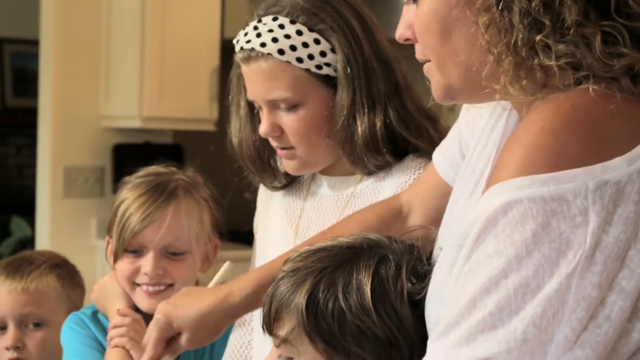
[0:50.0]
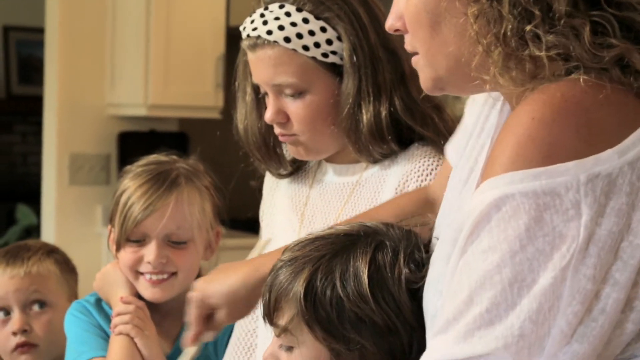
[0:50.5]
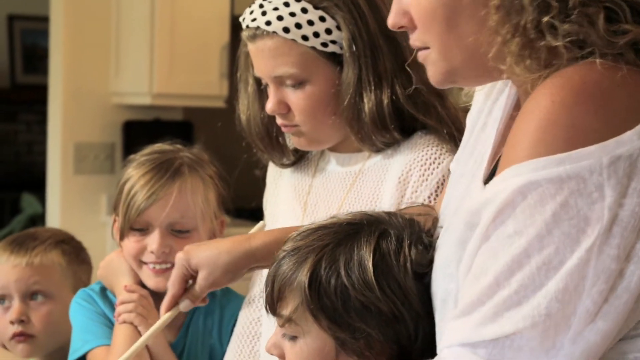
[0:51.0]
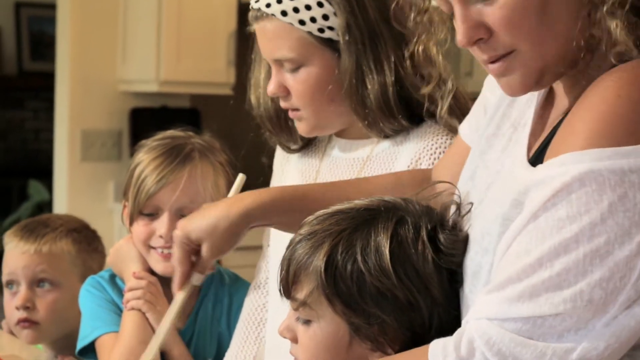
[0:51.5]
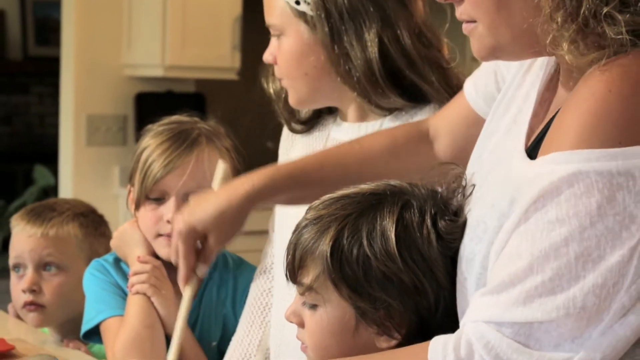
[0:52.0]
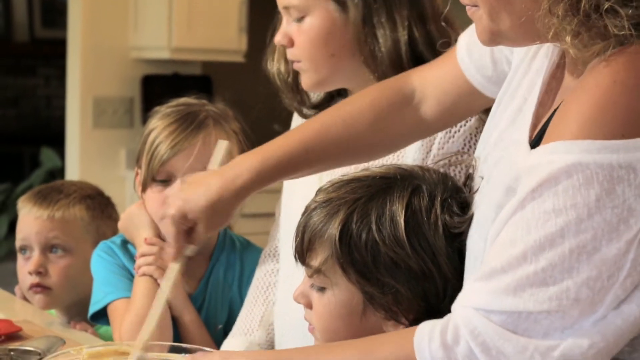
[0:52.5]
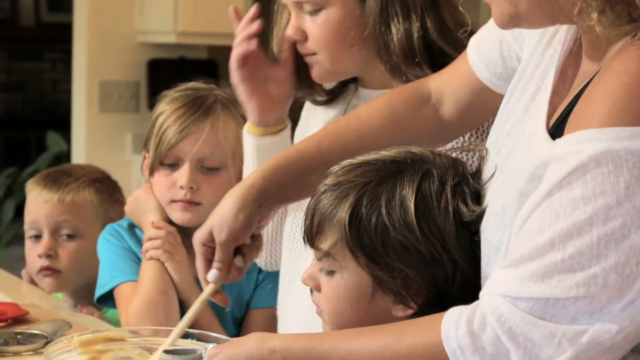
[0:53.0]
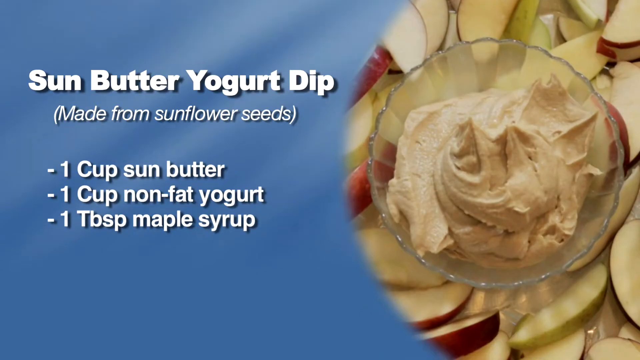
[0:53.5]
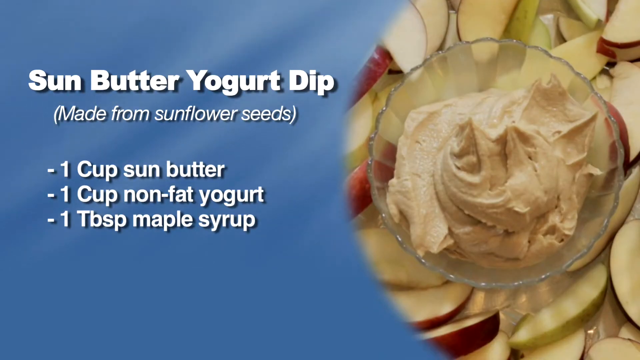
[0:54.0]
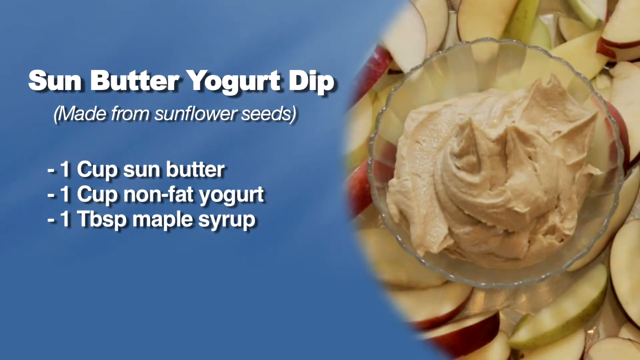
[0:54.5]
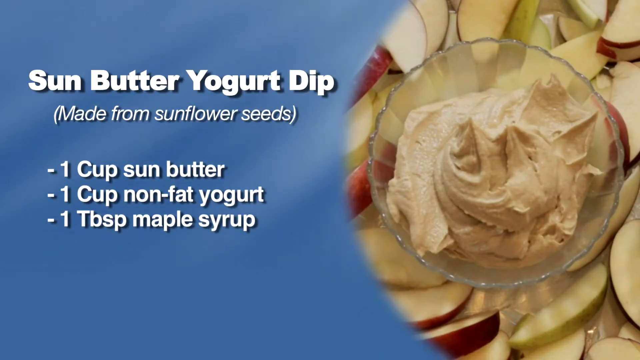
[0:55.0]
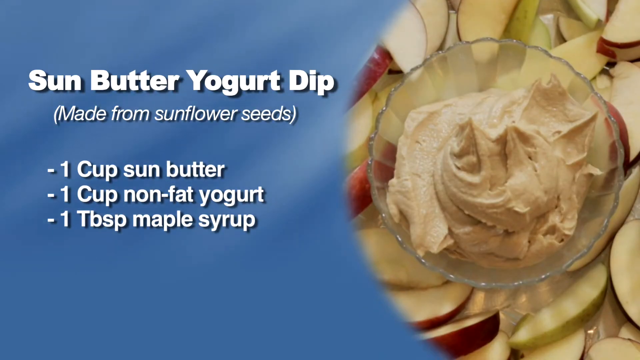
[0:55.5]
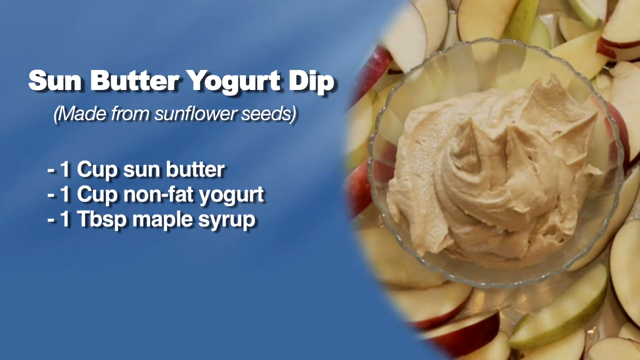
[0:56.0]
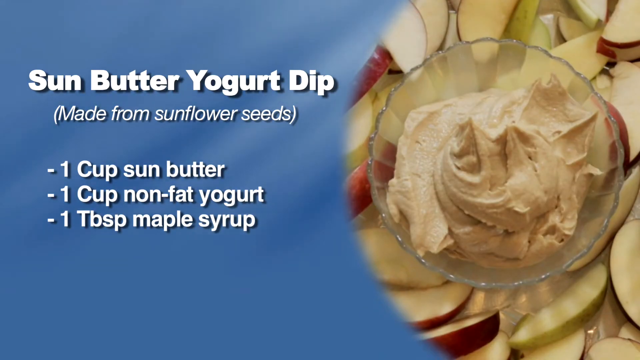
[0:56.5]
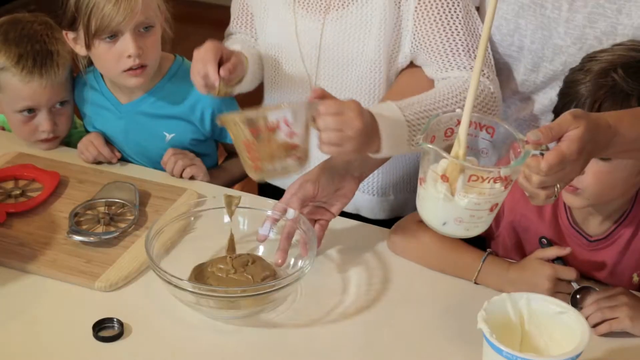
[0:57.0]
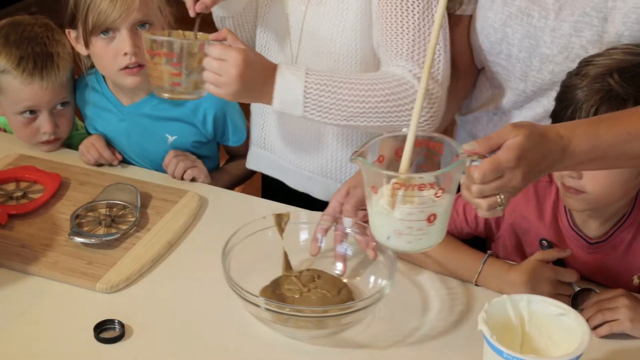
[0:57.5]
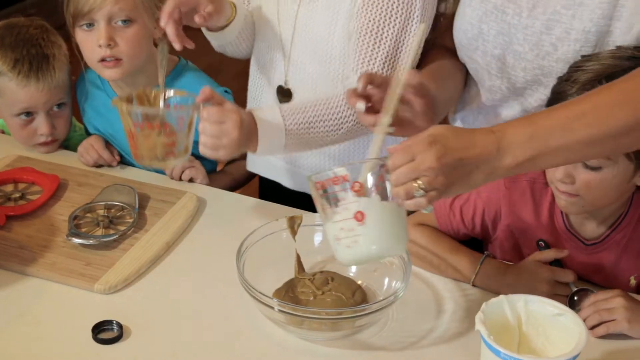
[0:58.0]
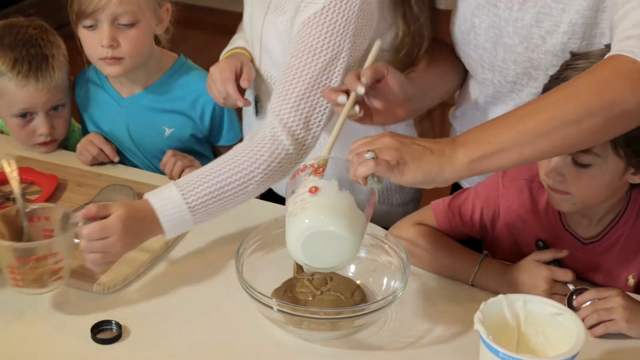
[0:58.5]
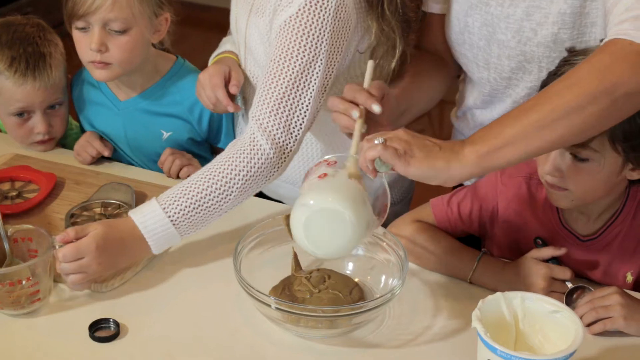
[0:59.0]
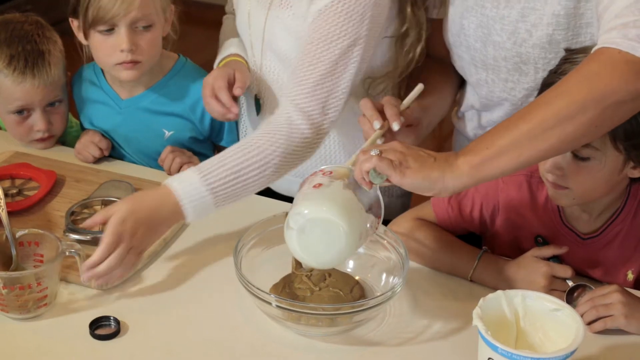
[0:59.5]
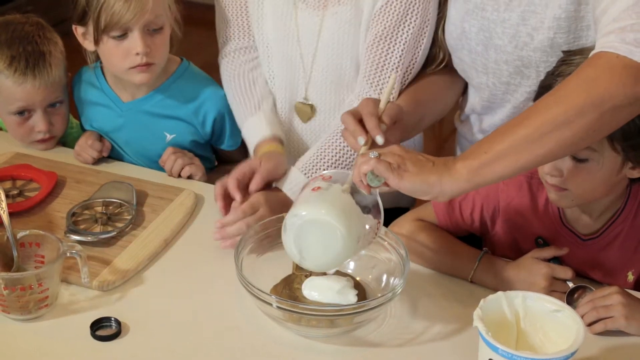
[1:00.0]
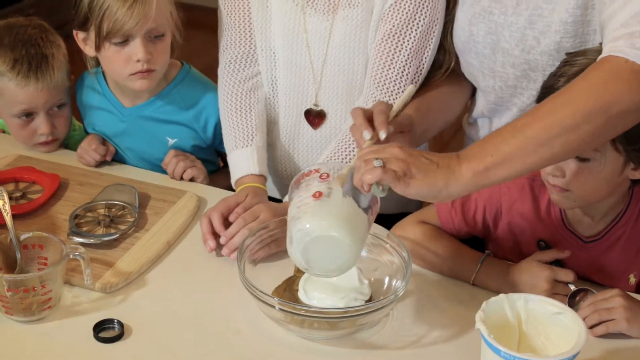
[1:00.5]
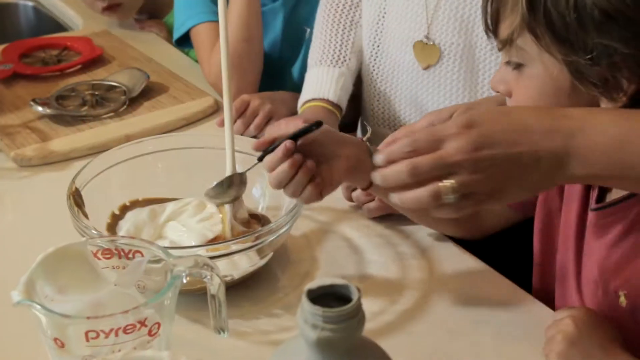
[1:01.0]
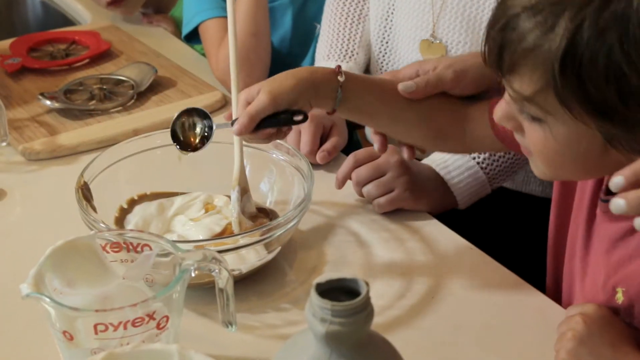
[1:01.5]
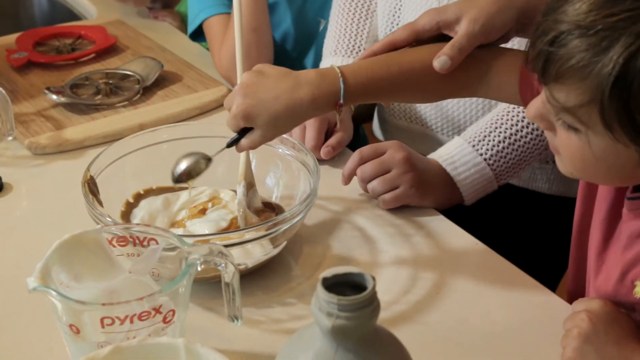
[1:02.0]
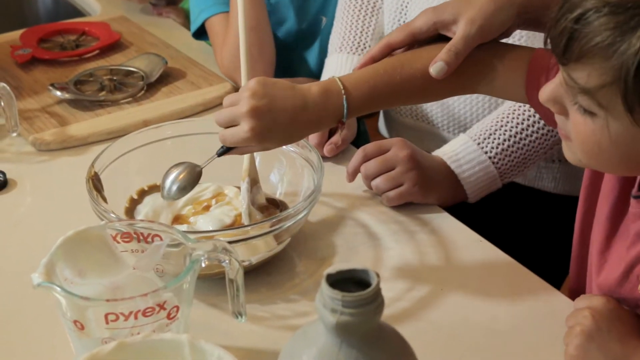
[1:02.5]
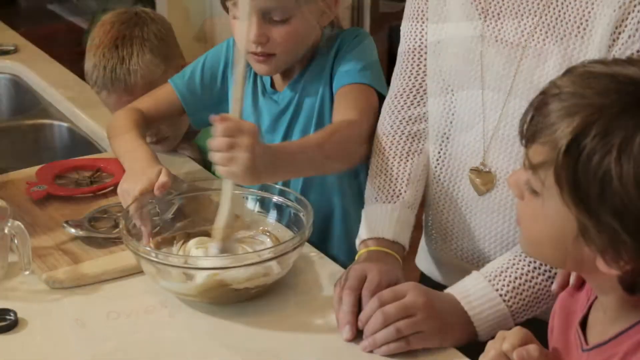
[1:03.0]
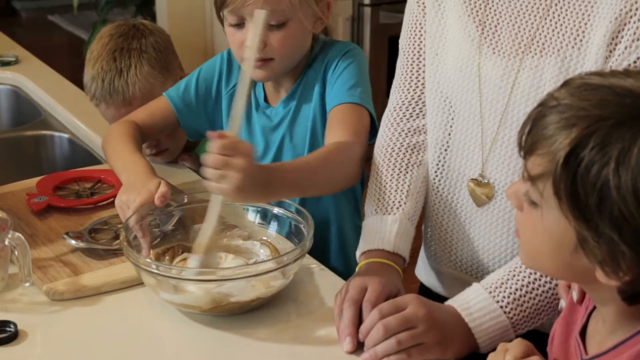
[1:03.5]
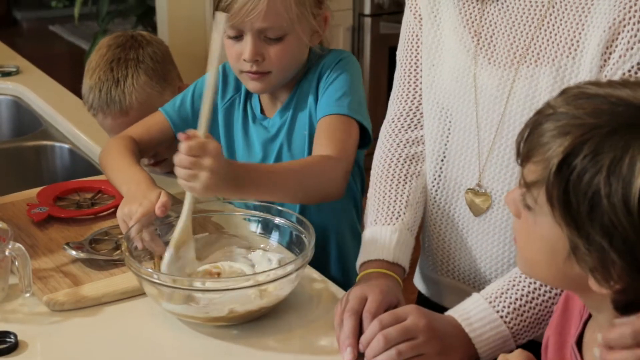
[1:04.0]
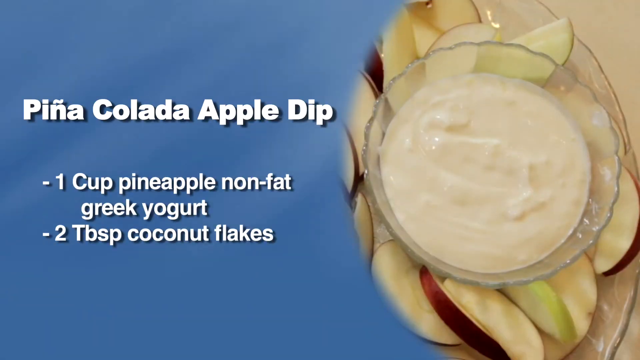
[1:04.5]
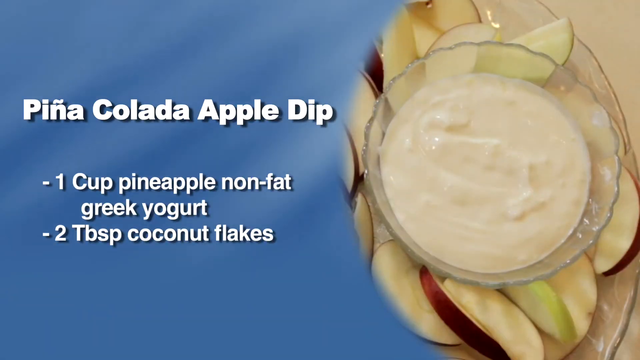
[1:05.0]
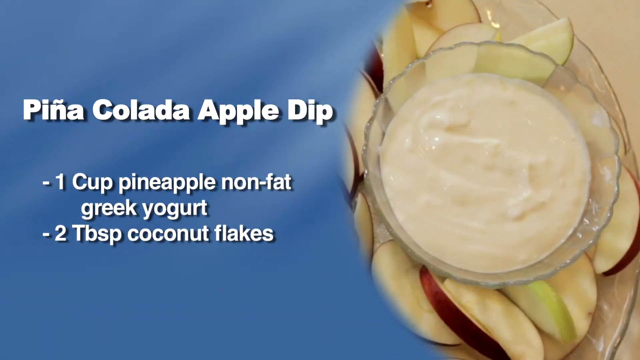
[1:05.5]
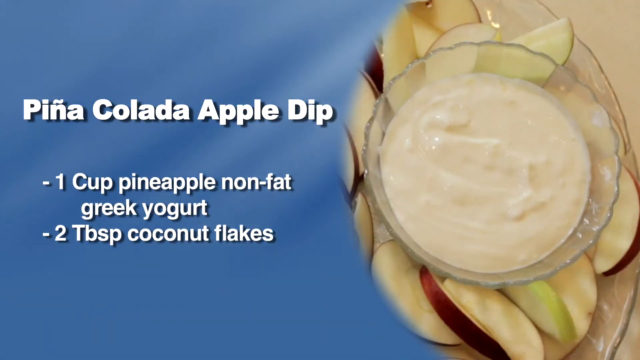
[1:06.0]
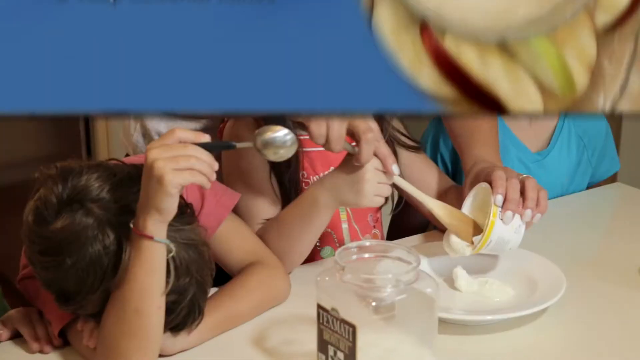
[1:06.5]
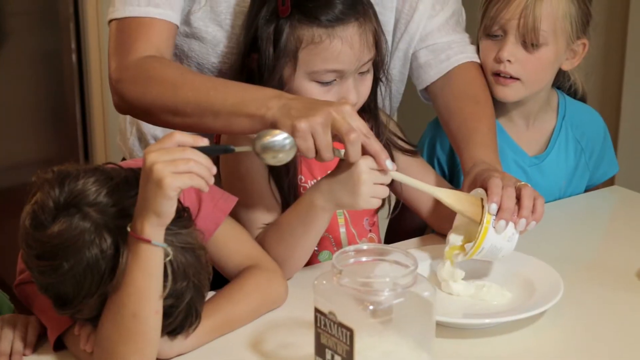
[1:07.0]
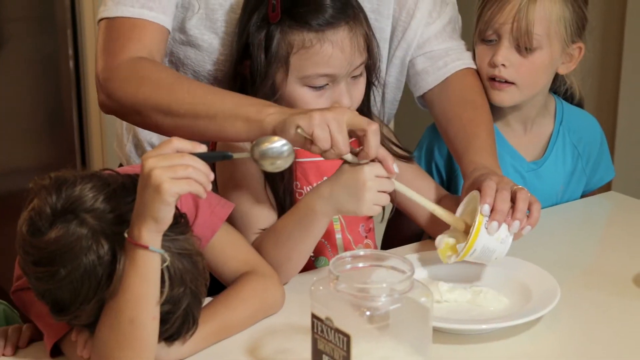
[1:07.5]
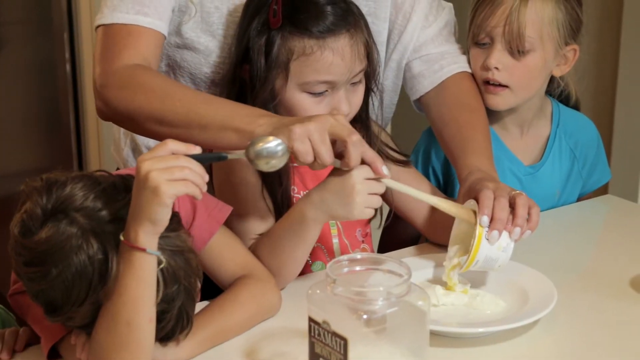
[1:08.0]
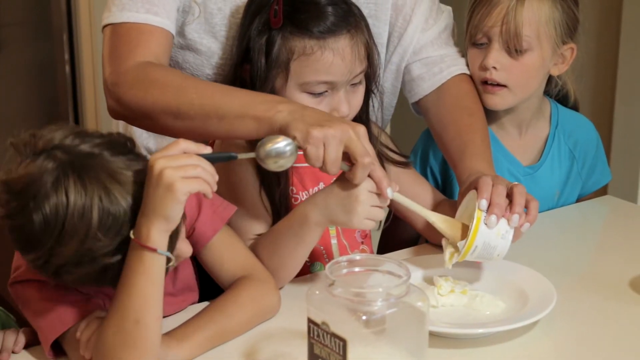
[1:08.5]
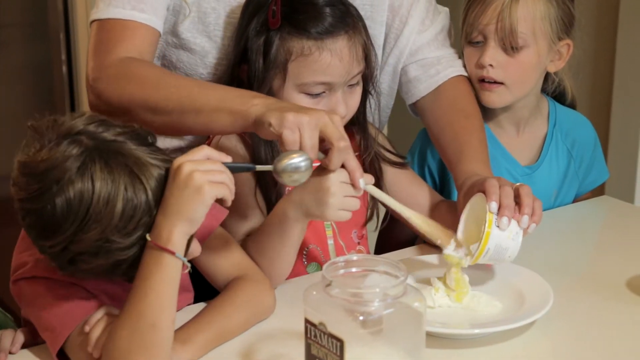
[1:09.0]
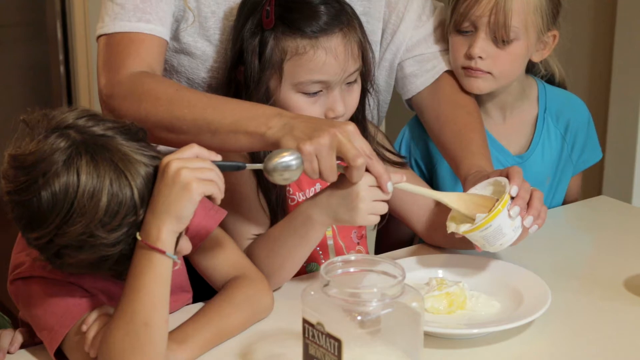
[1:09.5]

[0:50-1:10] The group of people is in the kitchen. A woman with an off-the-shoulder white t-shirt and curly hair stands behind the children, helping them stir something with a wooden spoon. An older child with a black and white polka dot headband and long brownish blond hair is next to her and appears to be helping the adult with the children. The camera shows the children watching the adult stir. A recipe then appears on the screen for "sun butter yogurt dip", made from sunflower seeds: "one cup sun butter, one cup nonfat yogurt, one tablespoon of maple syrup", with a picture of the sun butter yogurt dip surrounded by apple slices. Next, all of the children contribute to adding things to the bowl, each doing something: one stirs, one adds an ingredient with a measuring spoon. Another recipe appears, "pina colada apple dip": "one cup of pineapple", "non-fat Greek yogurt", "two tablespoon of coconut flakes", with the dip shown in a clear bowl surrounded by apple slices. The children and the adult are then shown again emptying some yogurt into a bowl; it seems they are making the second recipe.